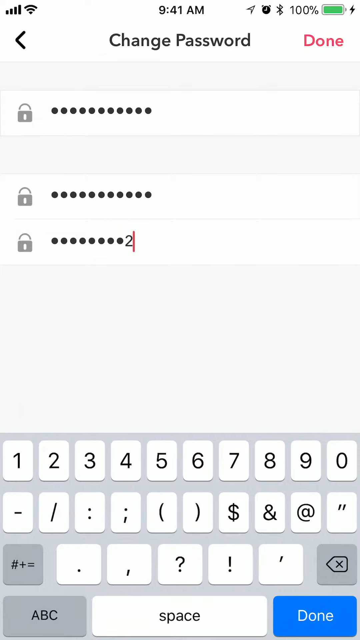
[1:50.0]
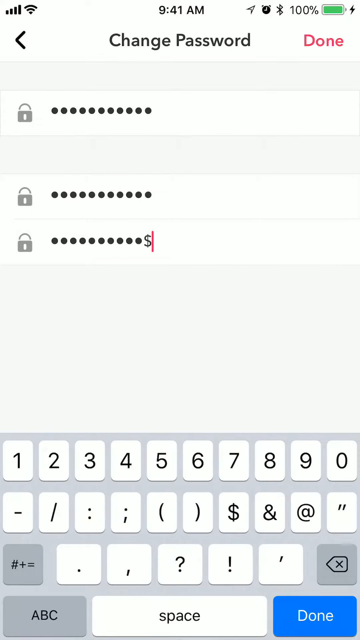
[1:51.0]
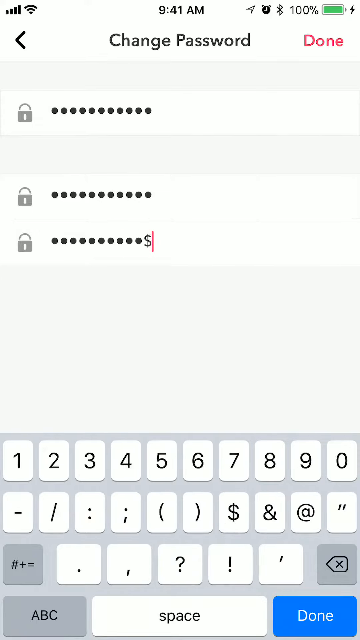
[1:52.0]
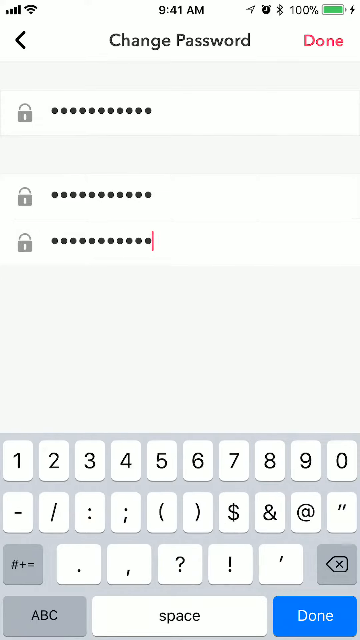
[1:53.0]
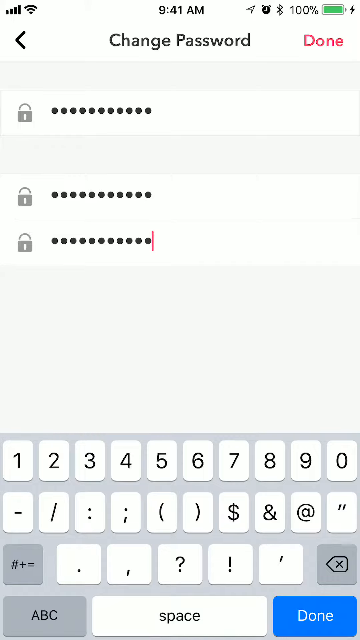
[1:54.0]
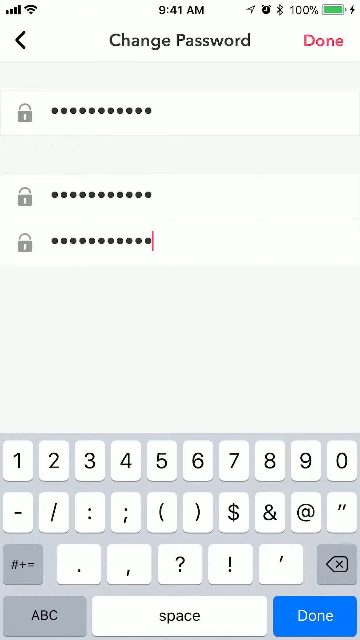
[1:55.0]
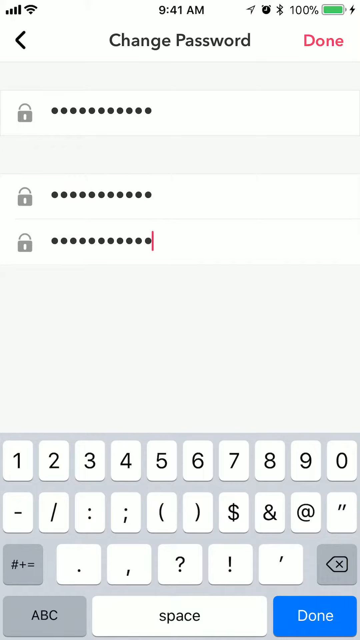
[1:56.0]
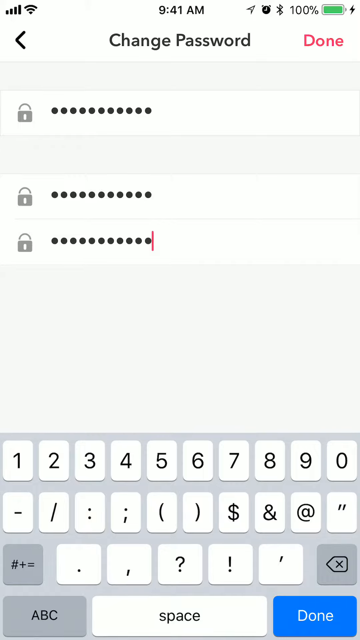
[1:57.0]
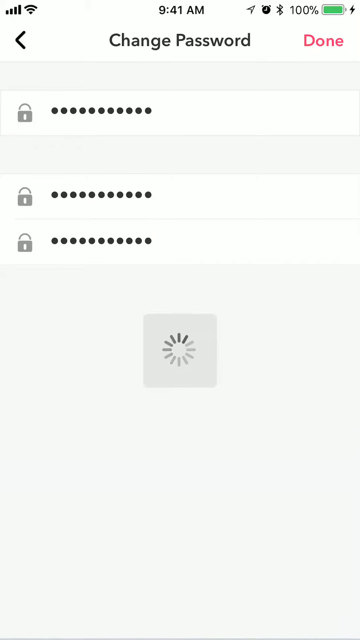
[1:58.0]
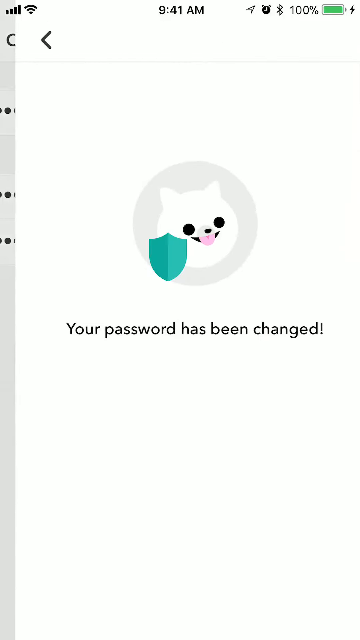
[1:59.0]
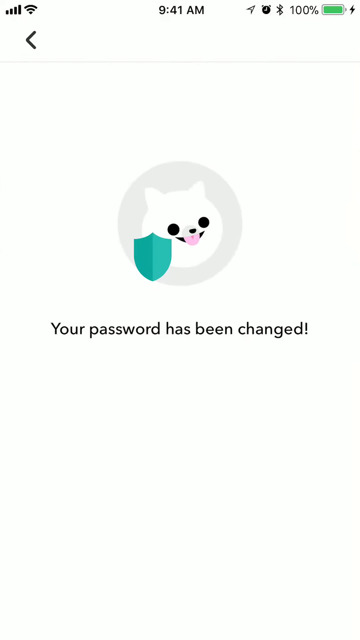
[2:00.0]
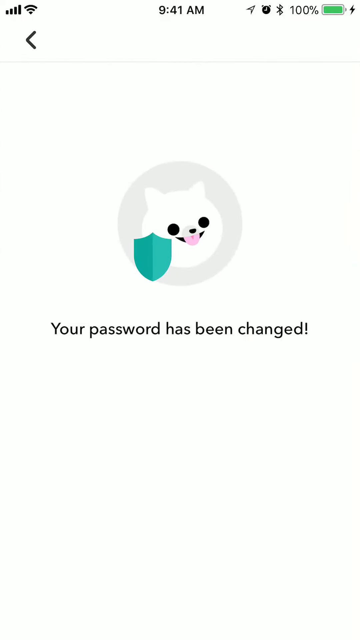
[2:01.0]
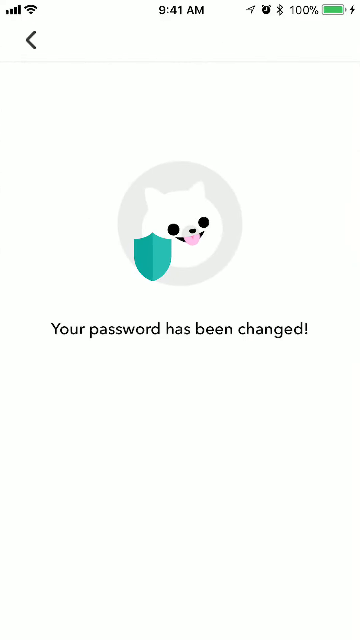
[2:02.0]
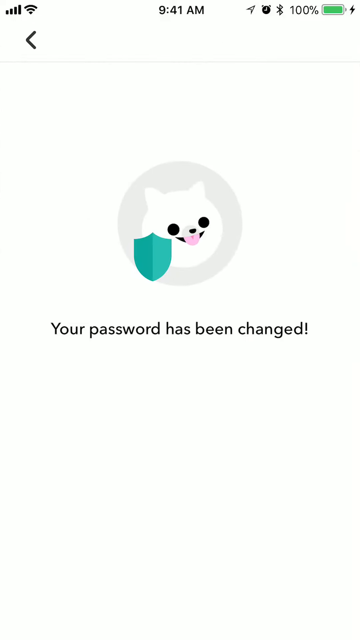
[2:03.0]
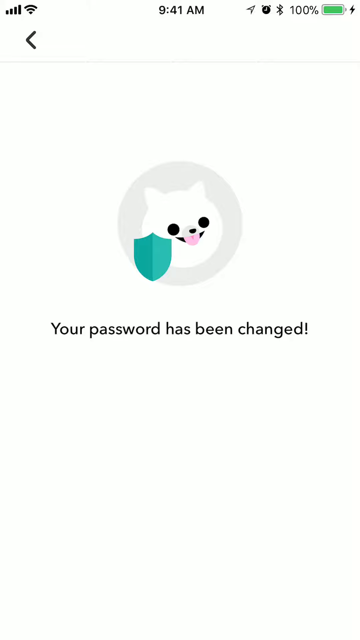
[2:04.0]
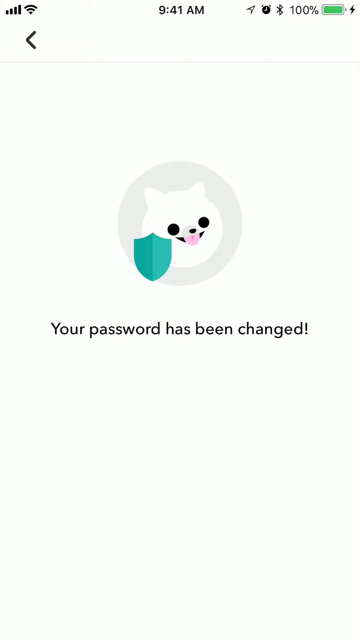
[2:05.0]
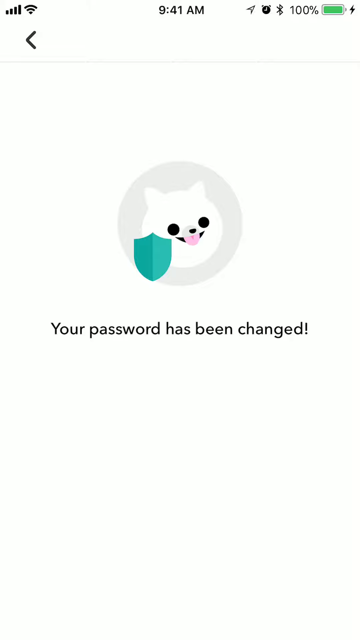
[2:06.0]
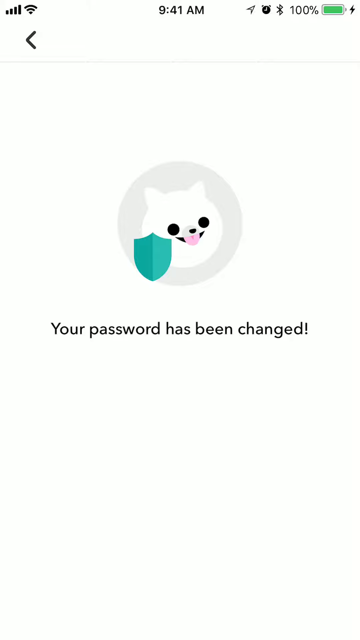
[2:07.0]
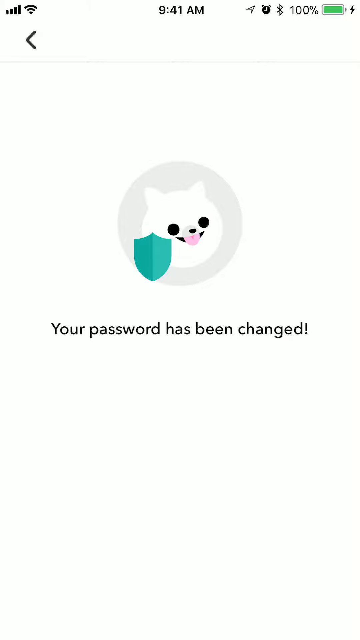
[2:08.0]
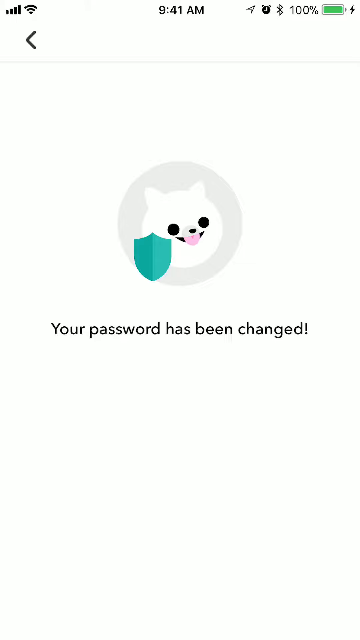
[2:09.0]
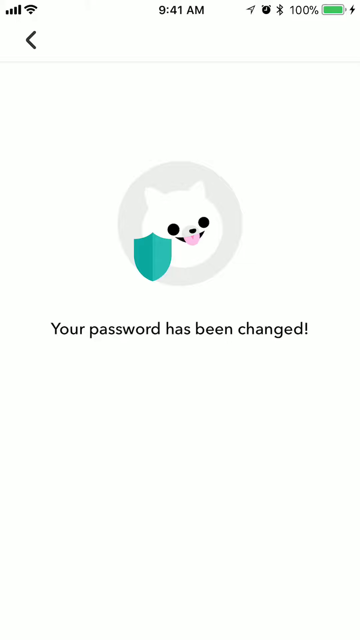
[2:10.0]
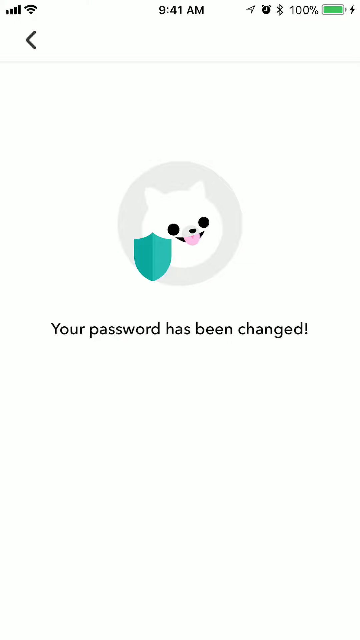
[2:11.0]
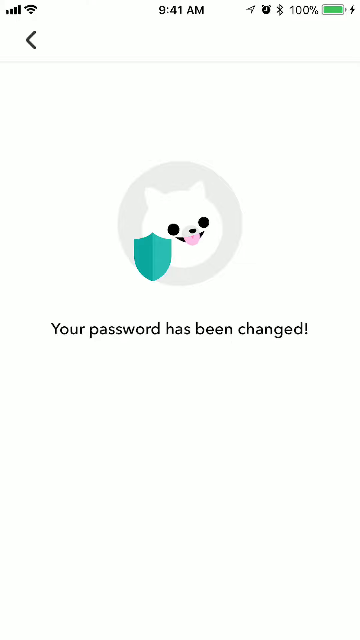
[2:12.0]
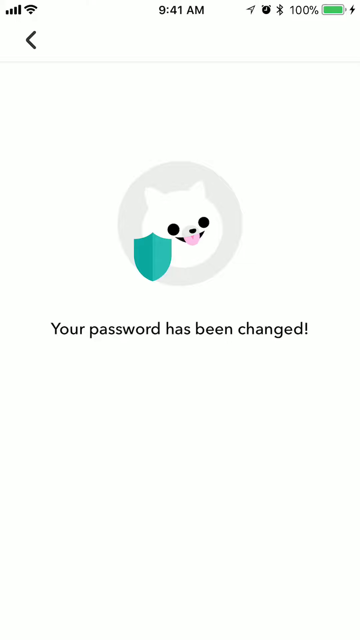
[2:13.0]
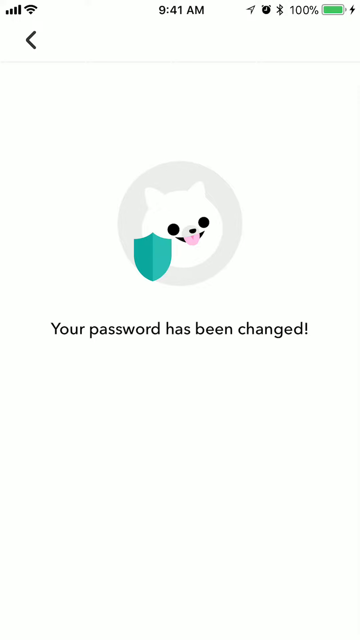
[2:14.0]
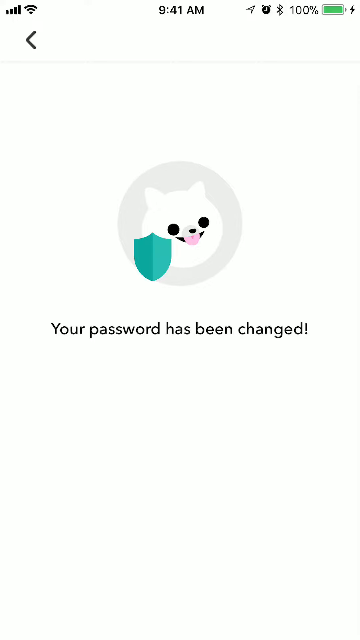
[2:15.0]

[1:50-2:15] The change password section of the Musical.ly app is completely filled out, with the old password, the new password "password21$" and the retyped new password. The user presses change, and the screen says "your password has been changed". A white dog with black eyes, a black nose and a pink tongue sticking out appears, with a green shield next to it. At the top left, the iPhone shows it is charging, with a lightning symbol next to the battery, which is fully charged at 100% and fully green. To the left of that are a Bluetooth symbol, a timer symbol, a location symbol and the time, 9:41 a.m.